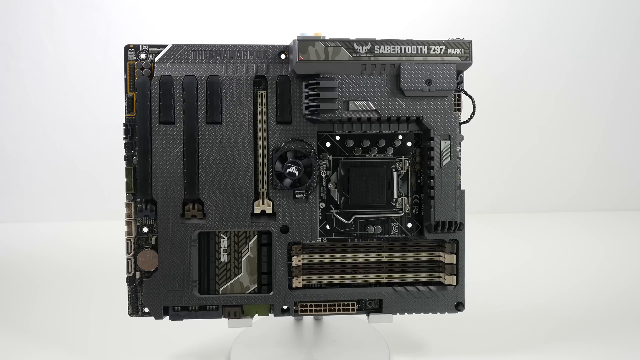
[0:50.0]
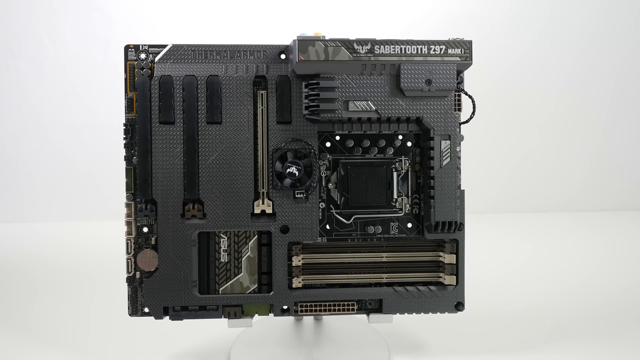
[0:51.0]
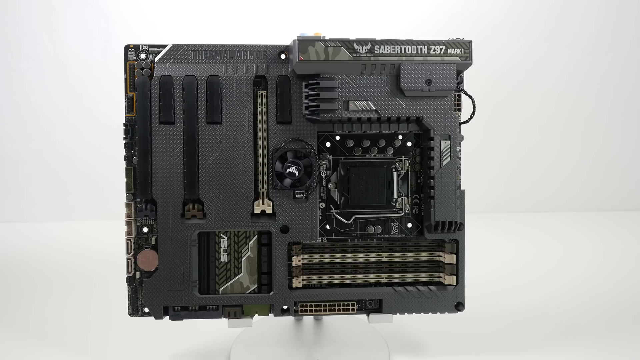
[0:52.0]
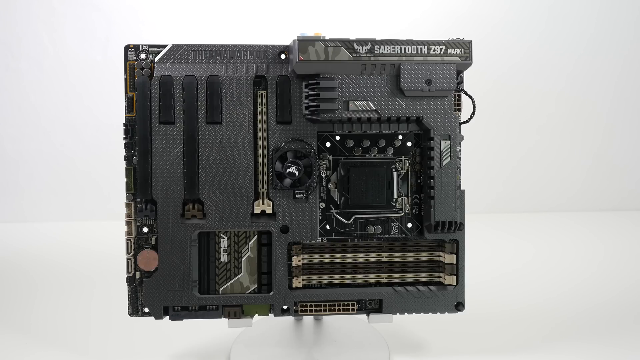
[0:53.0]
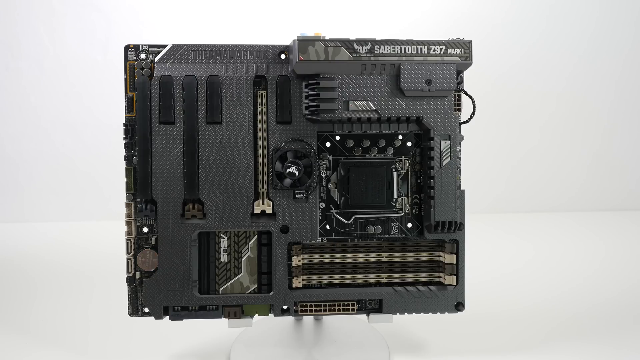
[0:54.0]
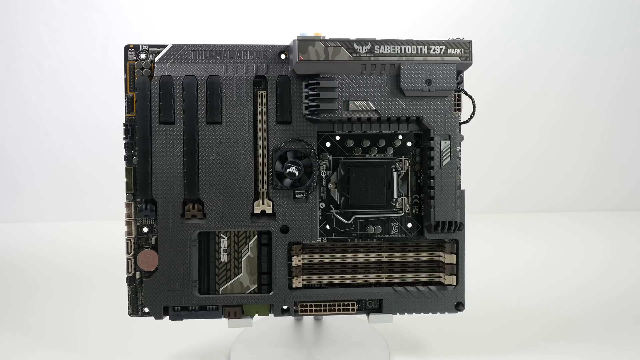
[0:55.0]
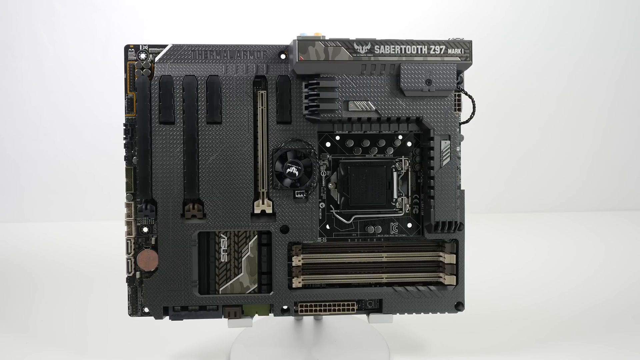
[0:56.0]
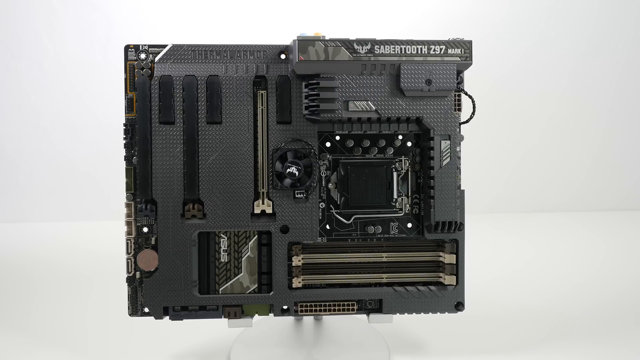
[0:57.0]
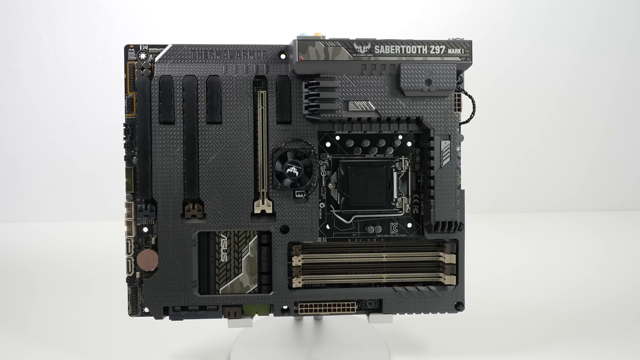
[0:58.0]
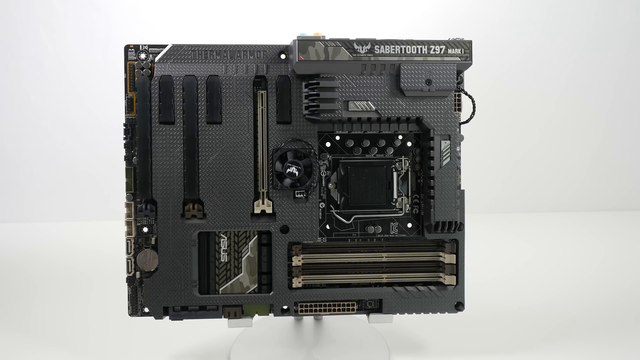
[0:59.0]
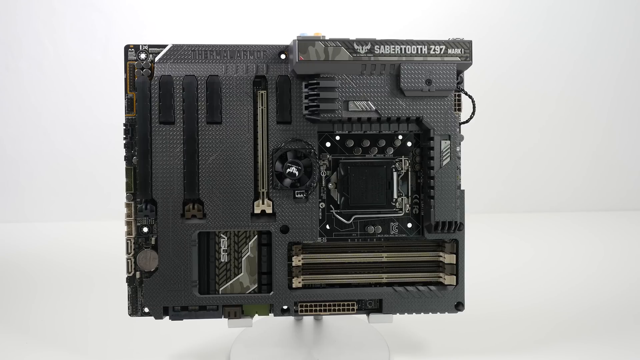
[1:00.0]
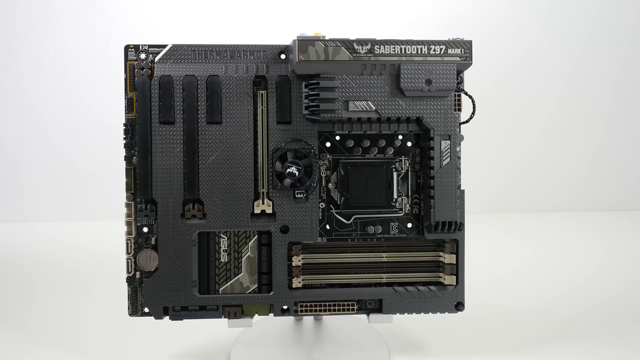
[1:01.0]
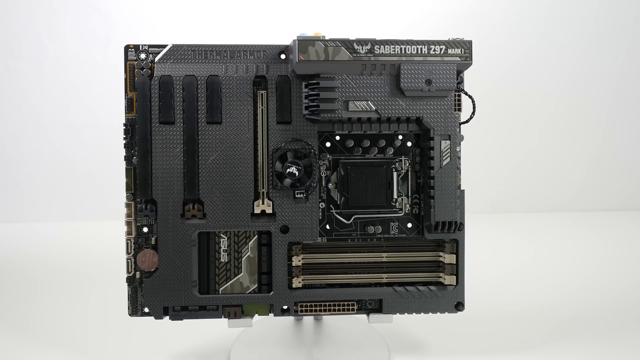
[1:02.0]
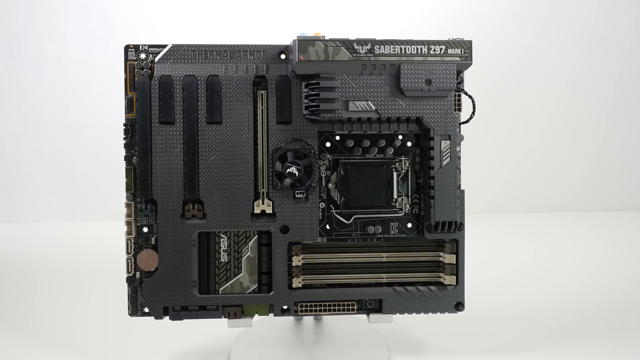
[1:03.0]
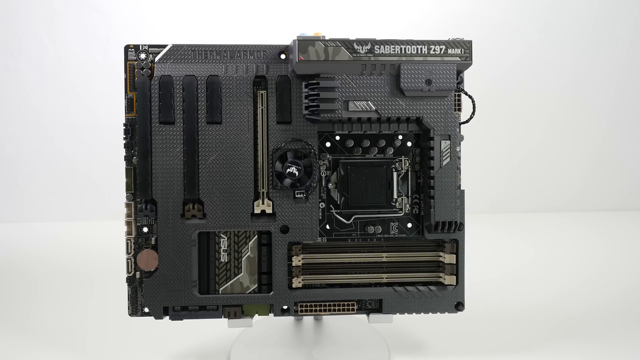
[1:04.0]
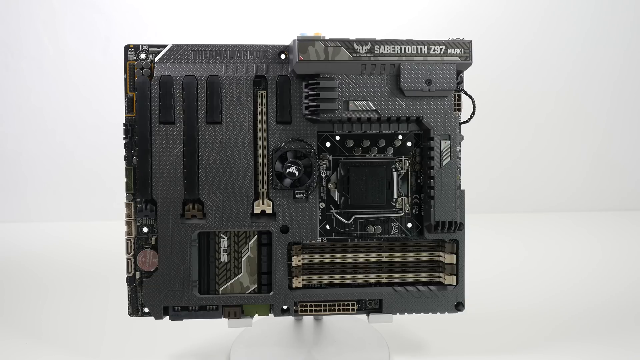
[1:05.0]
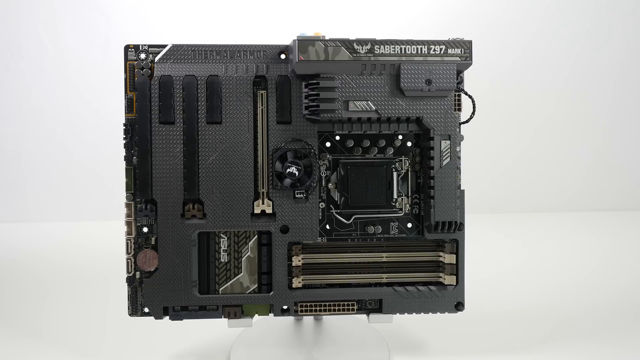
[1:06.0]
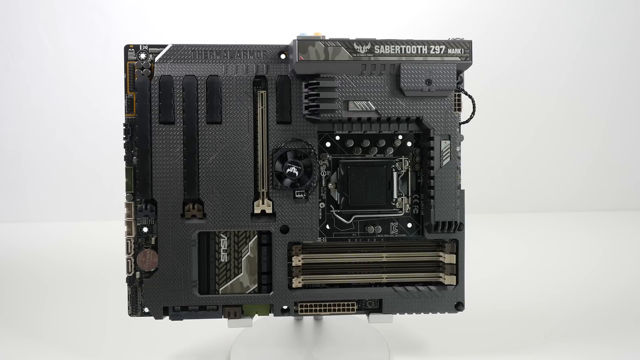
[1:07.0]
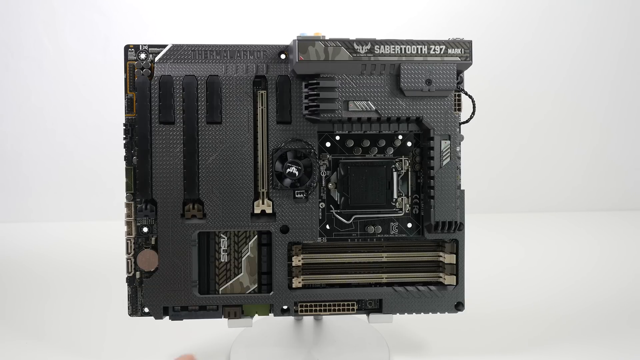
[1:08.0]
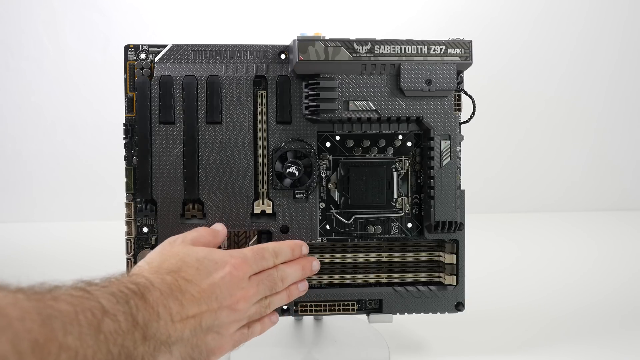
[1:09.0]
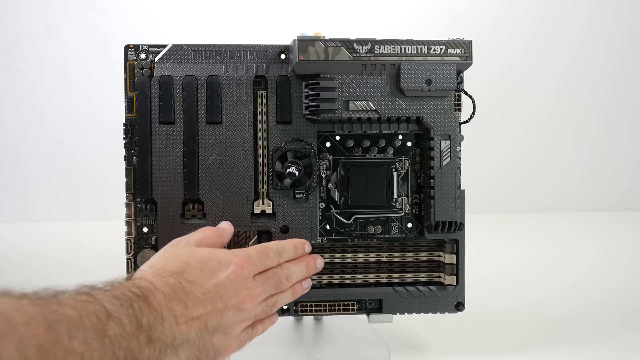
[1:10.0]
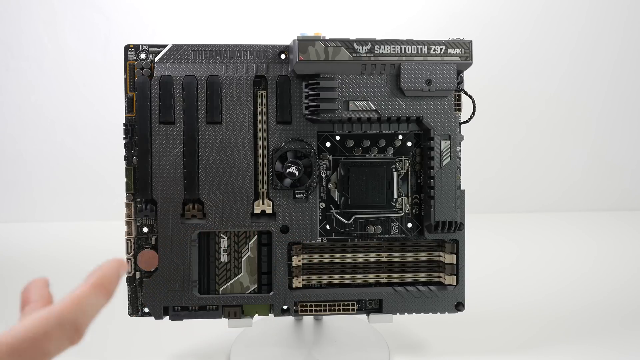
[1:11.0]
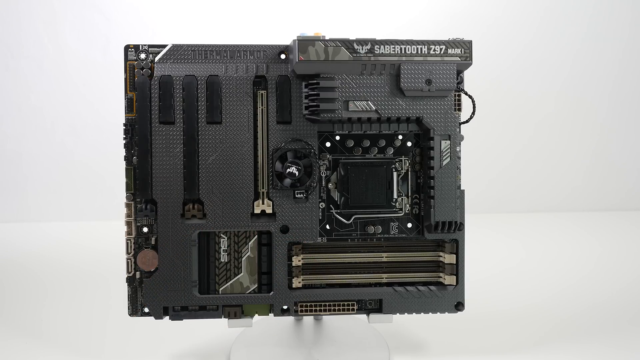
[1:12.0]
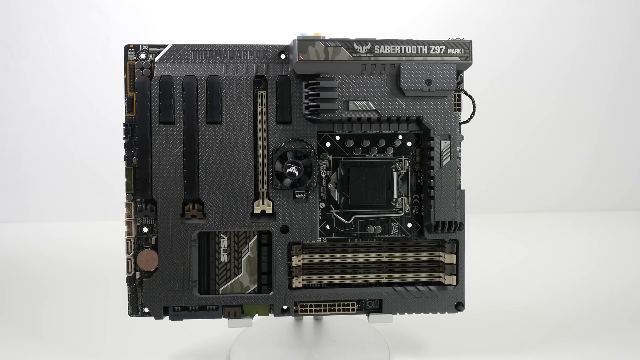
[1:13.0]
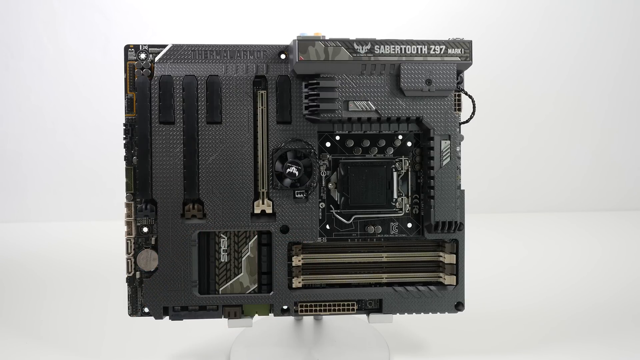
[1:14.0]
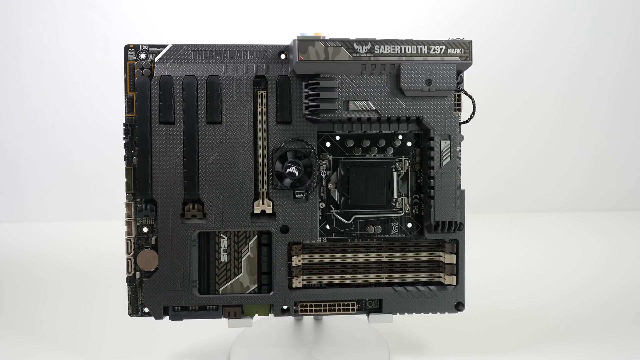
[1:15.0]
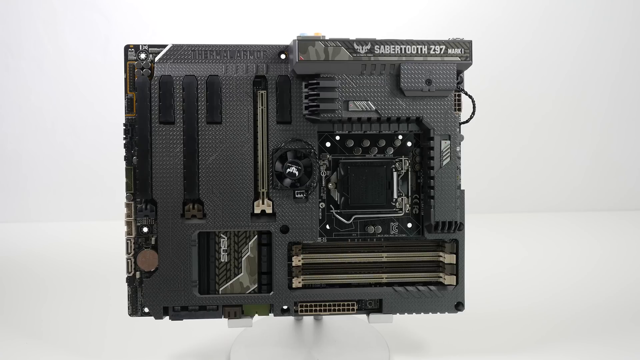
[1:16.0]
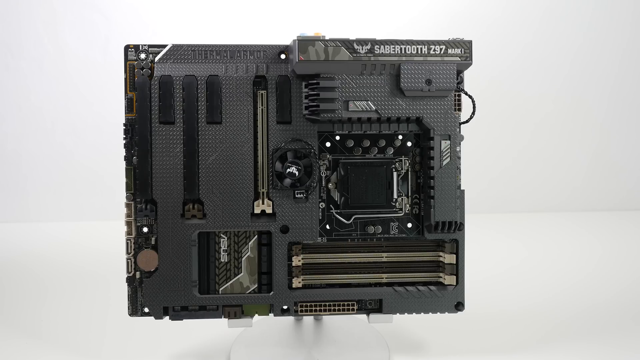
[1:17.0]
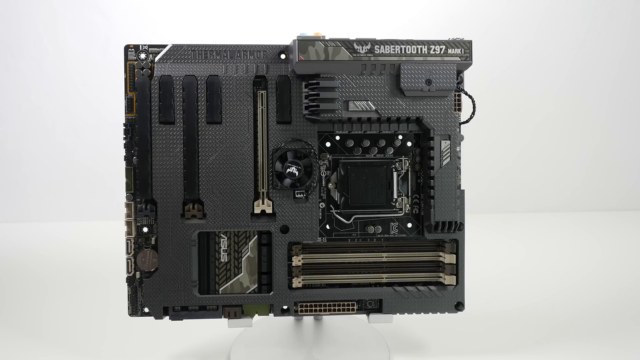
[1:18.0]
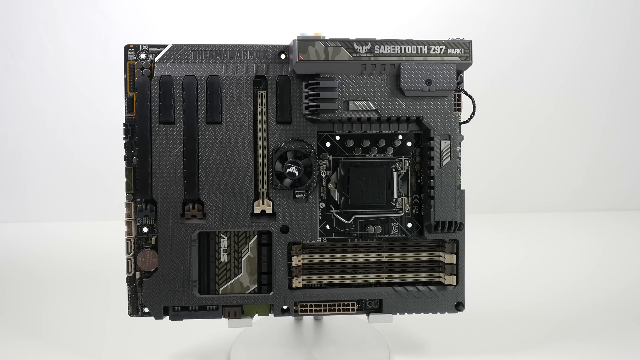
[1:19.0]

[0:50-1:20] The hand reaches into frame with an open palm and points toward four black and silver trays on the right-hand side of the motherboard near the bottom, gesturing at them with the index, middle and ring fingers, then leaves the view. The motherboard has a very futuristic design with dark elements and a dotted, stippled pattern. Many silver parts and ports are present on it, likely for connections between different computer parts. The backdrop is a white wall and a white table, with the line between them clearly visible approximately 35% from the bottom of the screen; the wall is slightly darker in shade than the stark white table. The video is very well lit with no distracting shadows, and the motherboard is placed on a white stand.